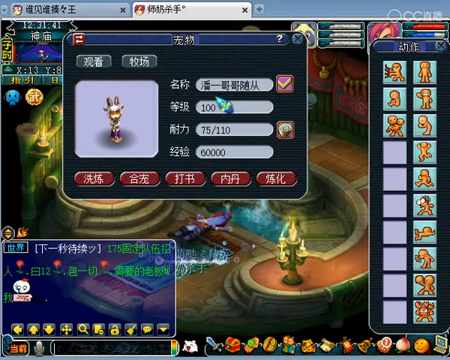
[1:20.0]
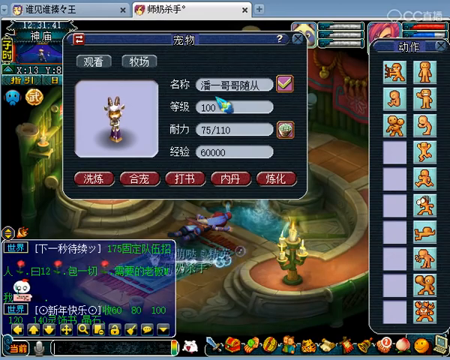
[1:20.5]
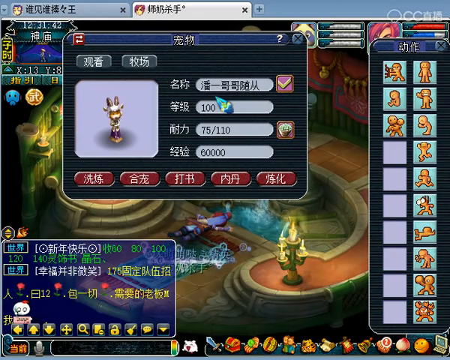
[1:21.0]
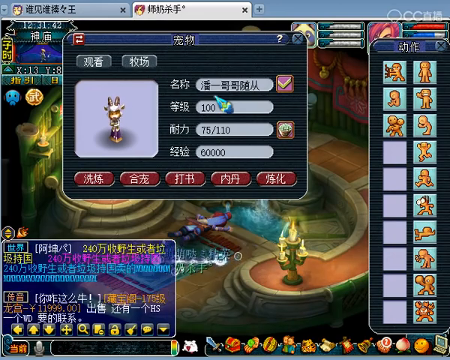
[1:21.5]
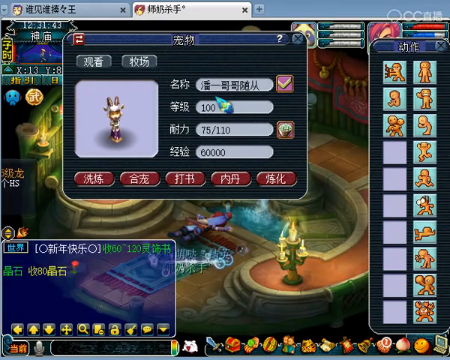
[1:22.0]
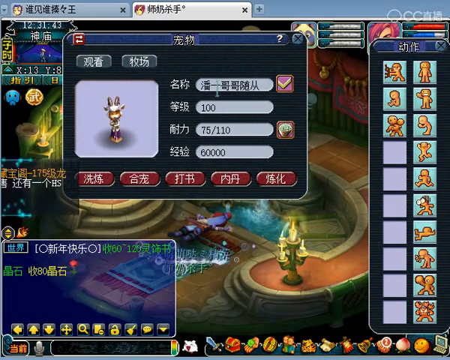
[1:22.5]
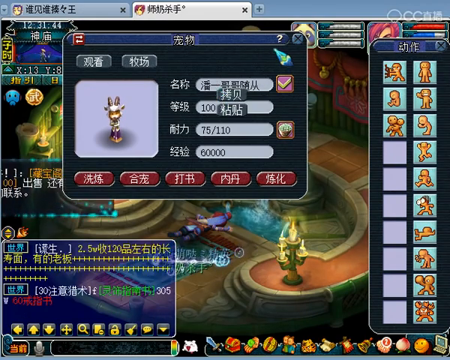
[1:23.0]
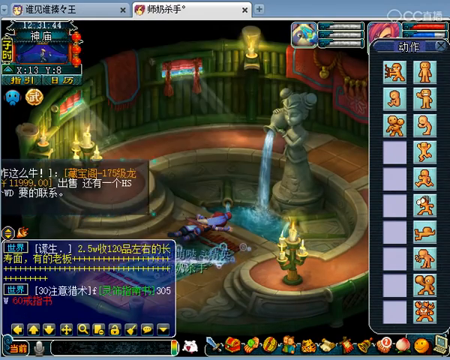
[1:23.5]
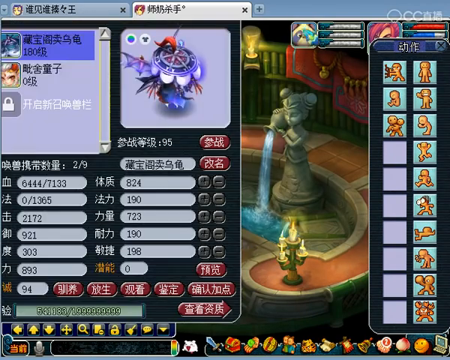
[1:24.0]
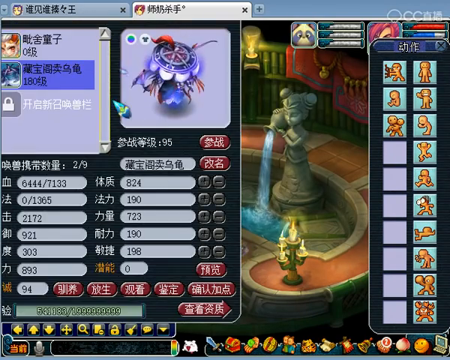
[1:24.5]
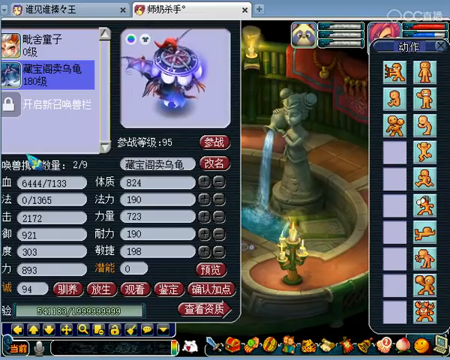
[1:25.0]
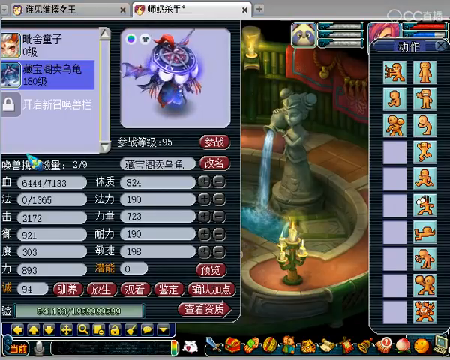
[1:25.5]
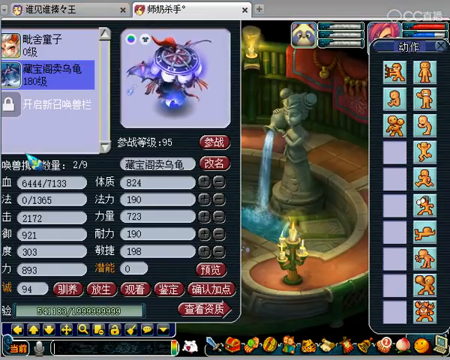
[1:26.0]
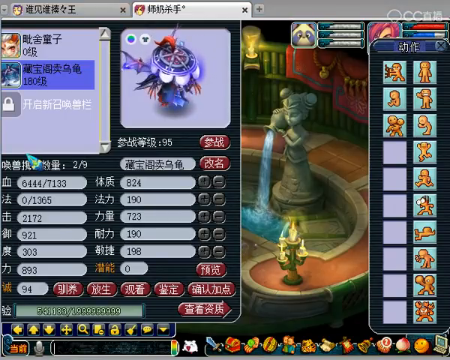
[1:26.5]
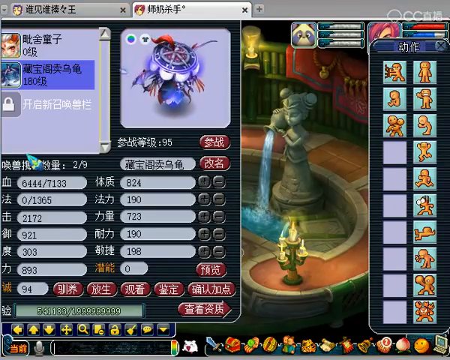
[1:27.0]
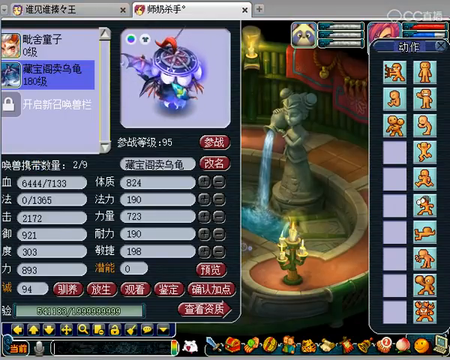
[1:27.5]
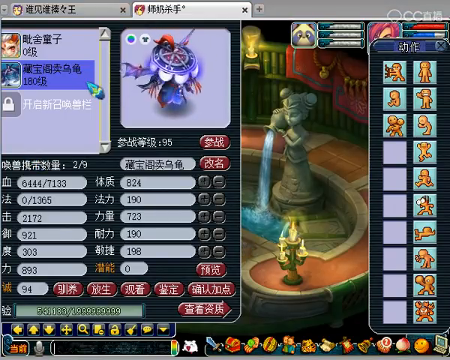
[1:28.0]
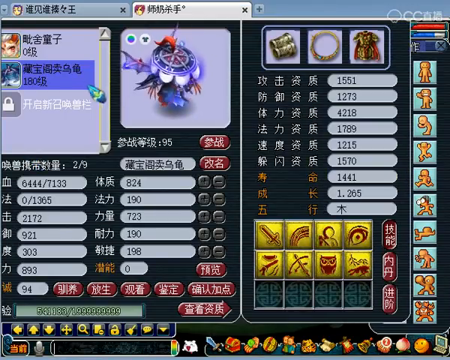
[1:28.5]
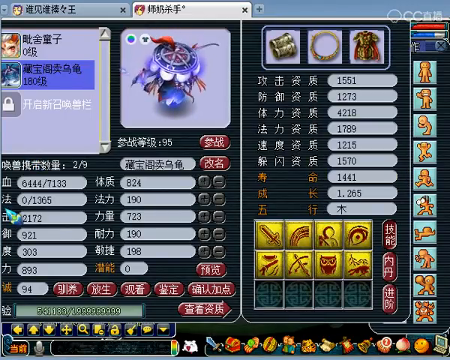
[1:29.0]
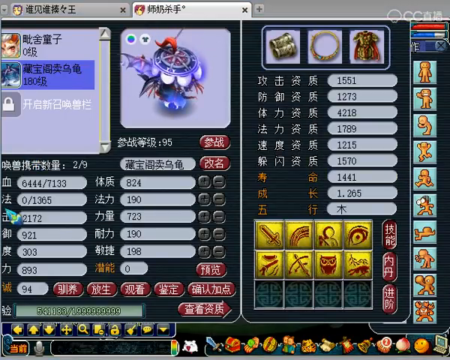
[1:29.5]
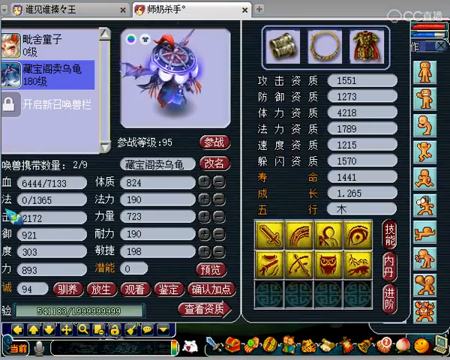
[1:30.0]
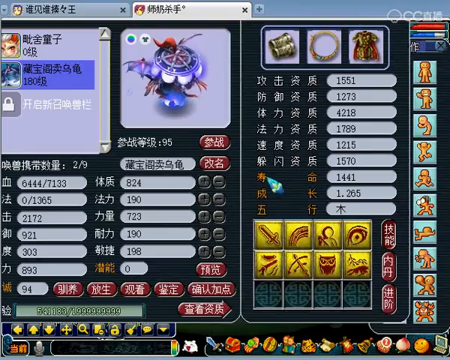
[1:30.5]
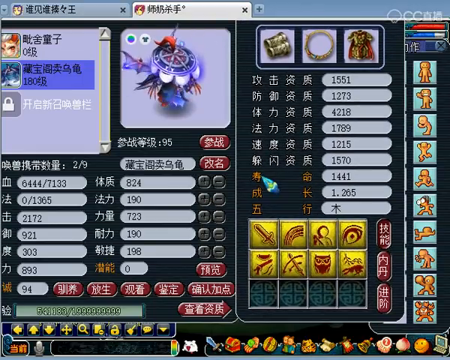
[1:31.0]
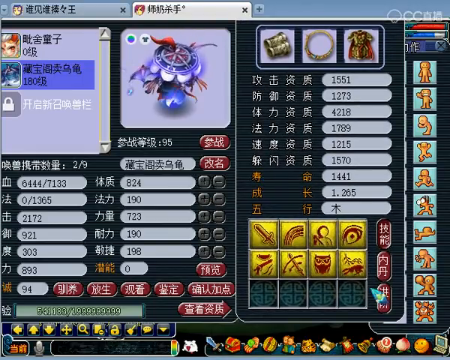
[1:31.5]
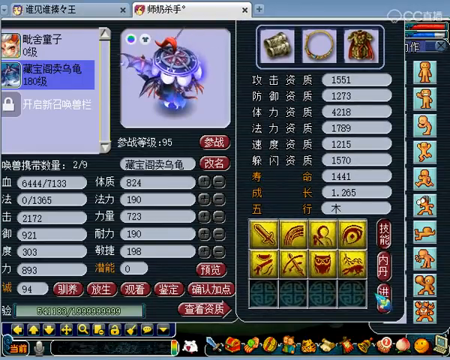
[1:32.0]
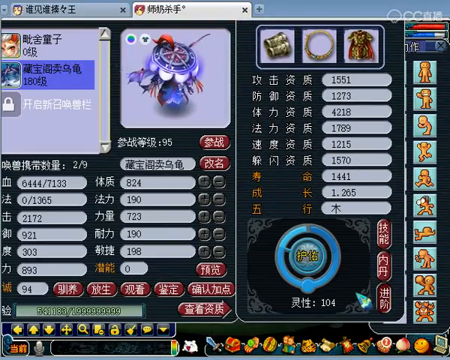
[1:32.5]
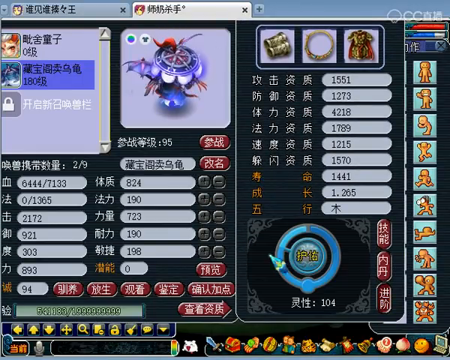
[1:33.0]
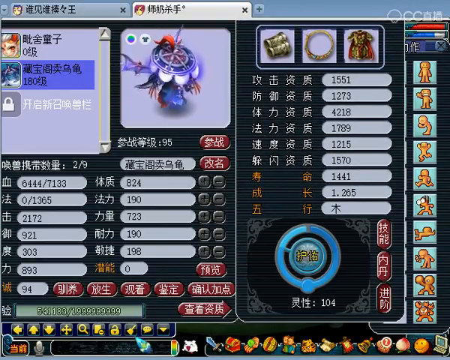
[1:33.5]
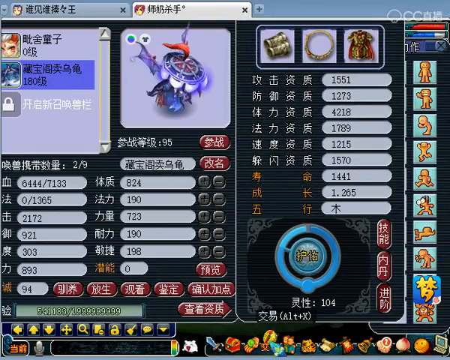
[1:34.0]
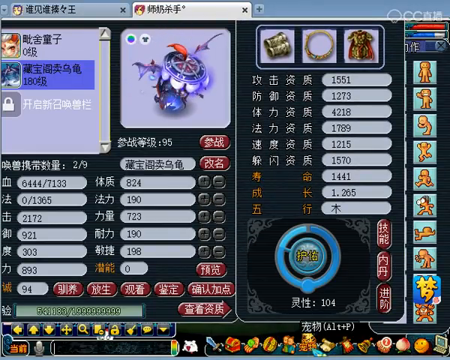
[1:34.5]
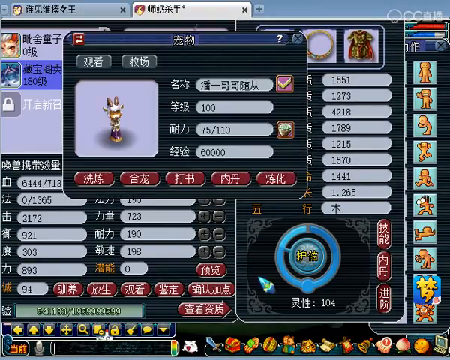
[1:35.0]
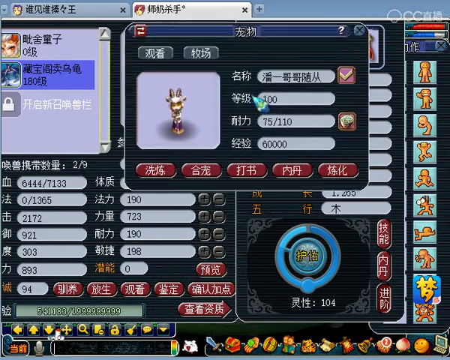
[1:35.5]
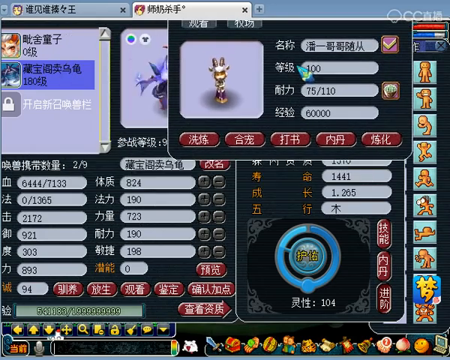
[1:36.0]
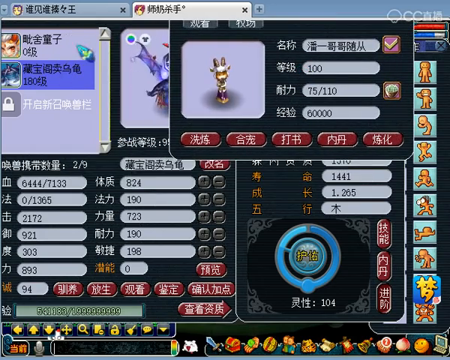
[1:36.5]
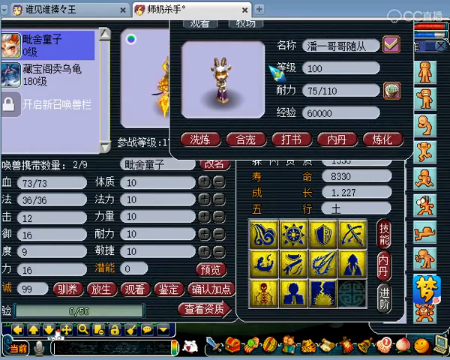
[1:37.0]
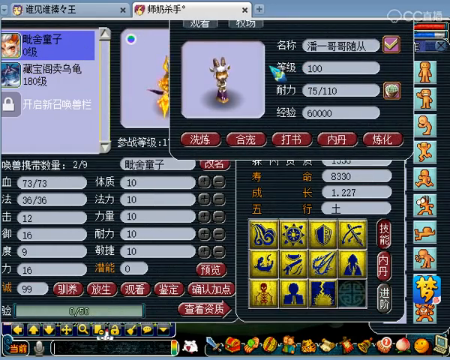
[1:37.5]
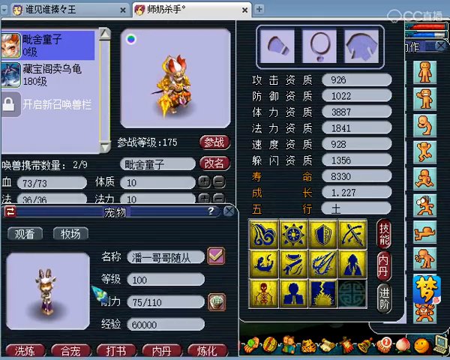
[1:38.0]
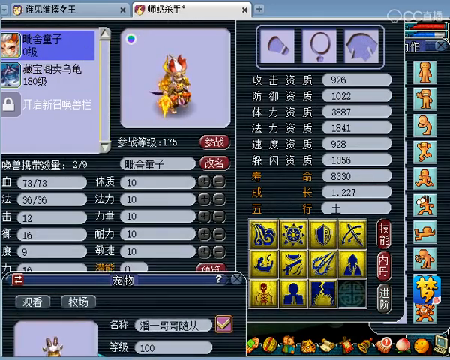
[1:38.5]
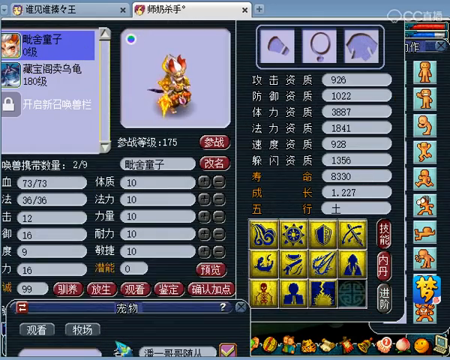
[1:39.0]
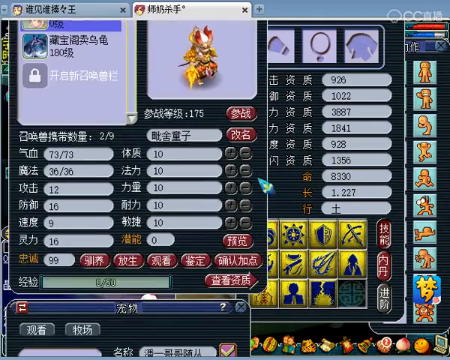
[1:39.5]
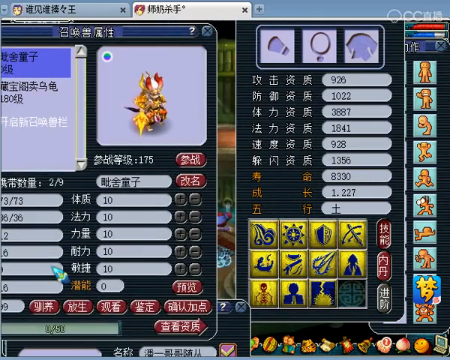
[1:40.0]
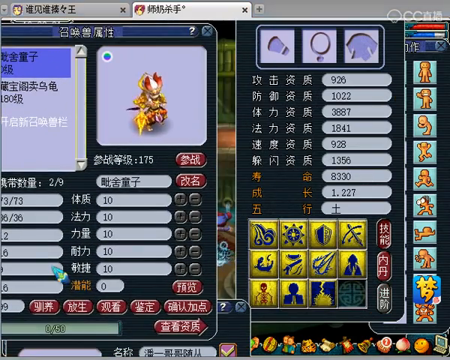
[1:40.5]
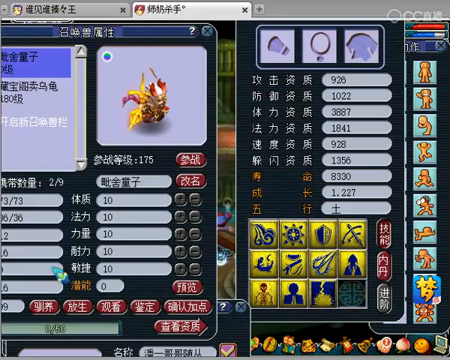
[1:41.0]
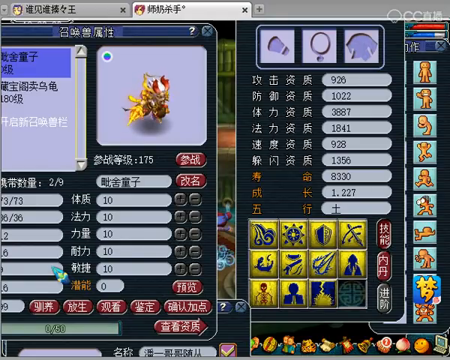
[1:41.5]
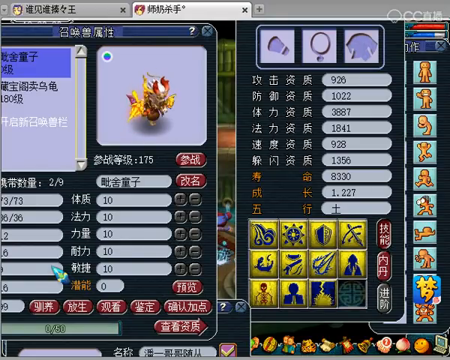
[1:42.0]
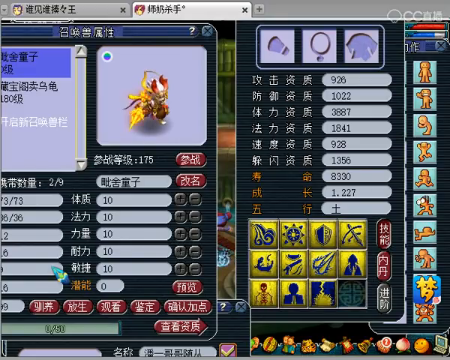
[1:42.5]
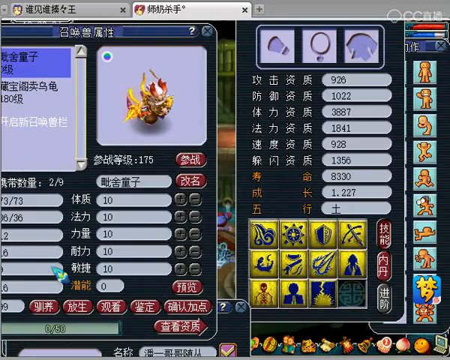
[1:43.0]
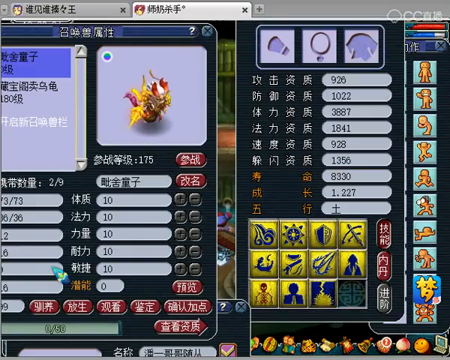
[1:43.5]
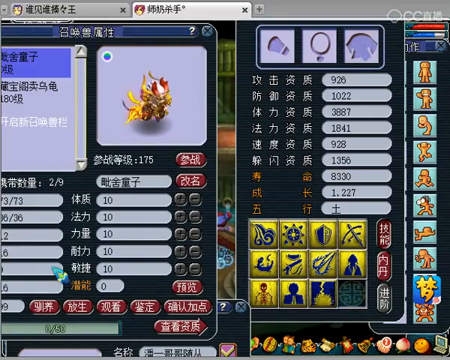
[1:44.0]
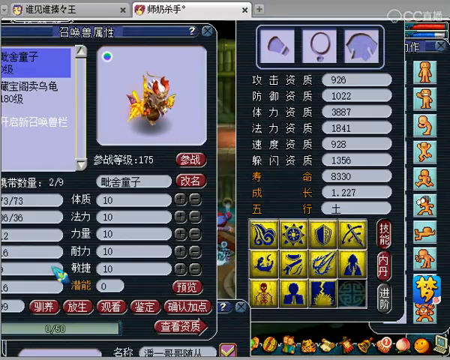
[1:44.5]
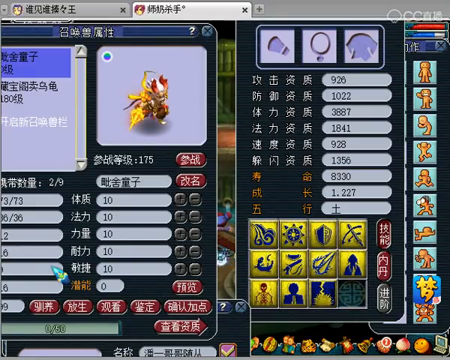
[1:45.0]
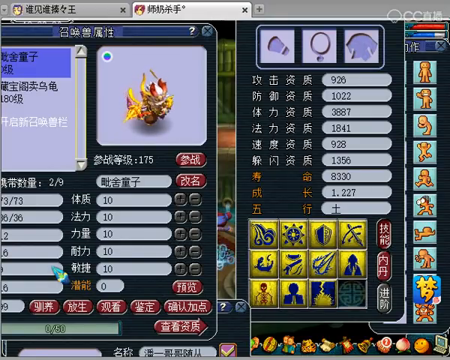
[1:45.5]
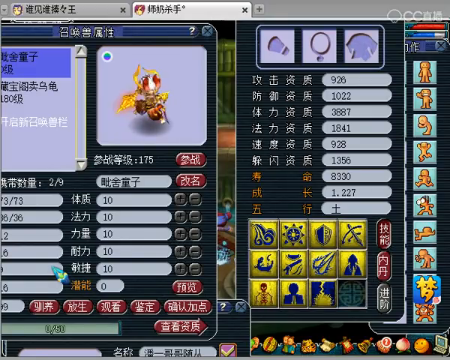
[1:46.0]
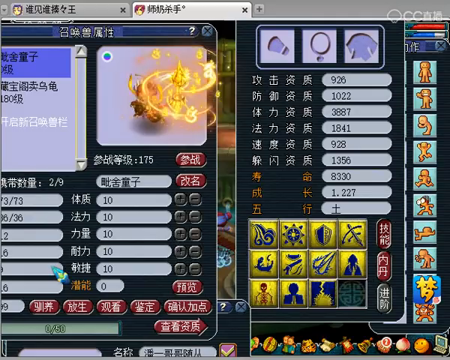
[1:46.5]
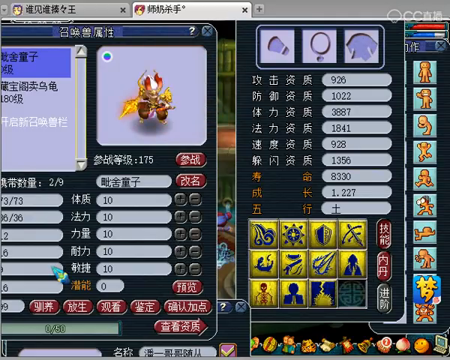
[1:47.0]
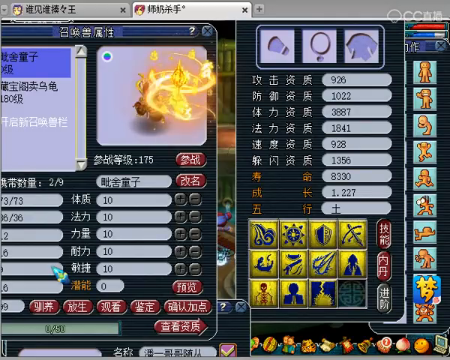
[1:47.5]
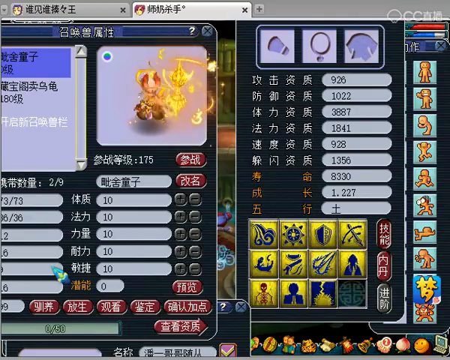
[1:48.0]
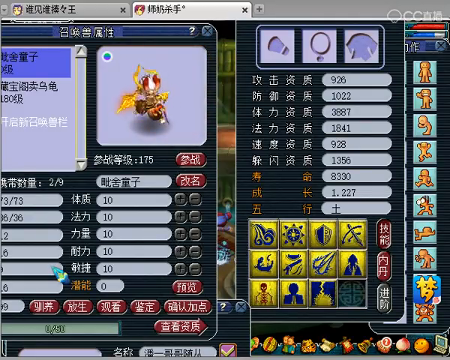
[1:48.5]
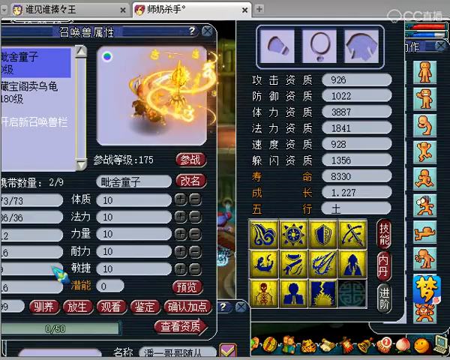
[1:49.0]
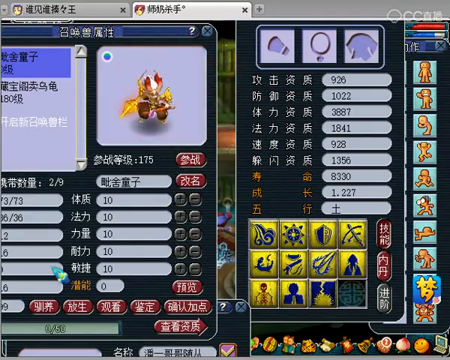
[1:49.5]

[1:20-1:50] The player is still going through the menus. A dog character appears in a small view screen. It looks somewhat like a goat, something between a goat and a dog: its horns go toward the back of its head, while its face is dog-shaped with a big black nose and a golden face. It is anthropomorphic, standing on two legs. The player then clicks on the menu. The purple ghost monster is no longer in the monster menu, so the player apparently got rid of her, leaving only the purple jellyfish character and the red-helmeted creature. The player looks at some of the purple jellyfish's stats and brings up the dog again, maybe comparing it to their current monsters.